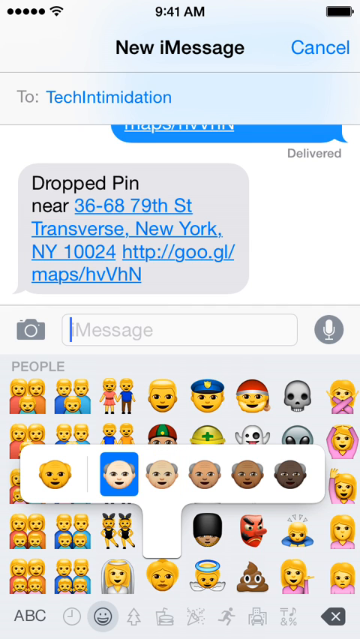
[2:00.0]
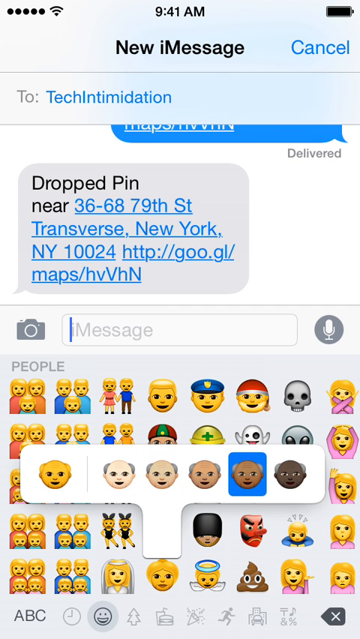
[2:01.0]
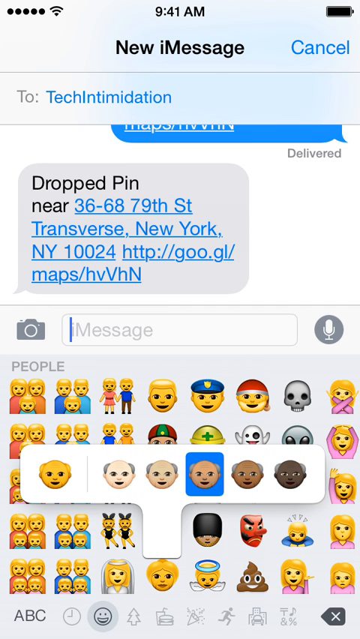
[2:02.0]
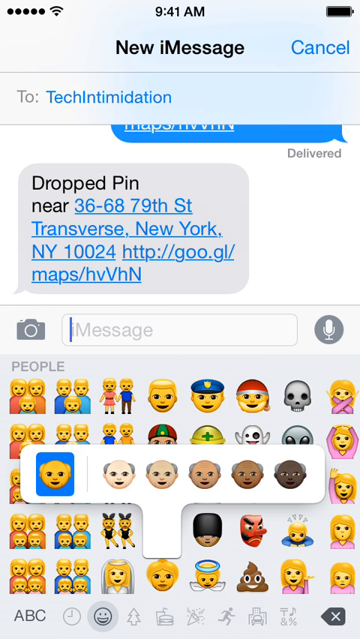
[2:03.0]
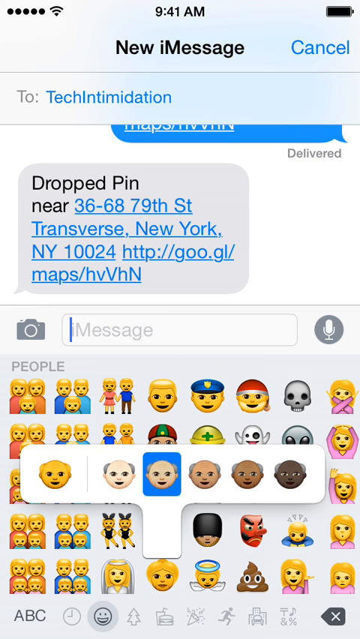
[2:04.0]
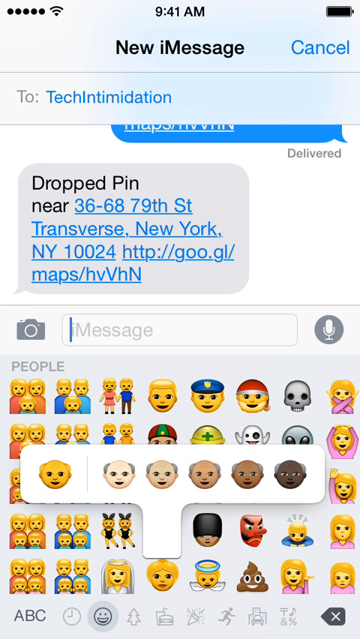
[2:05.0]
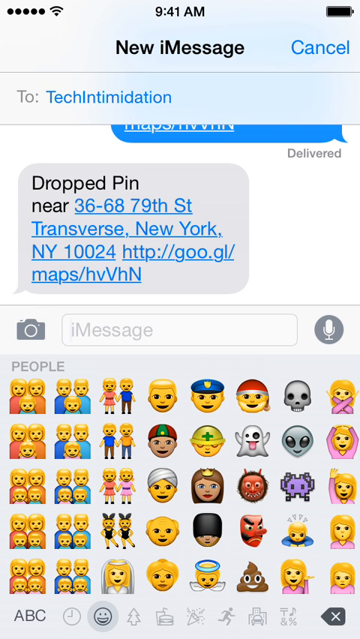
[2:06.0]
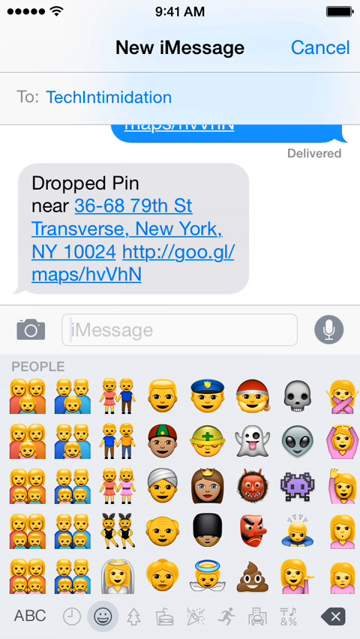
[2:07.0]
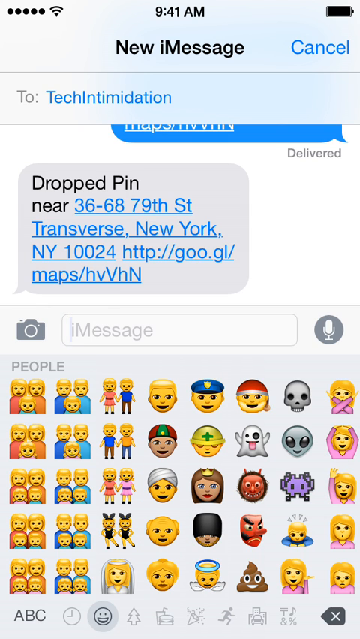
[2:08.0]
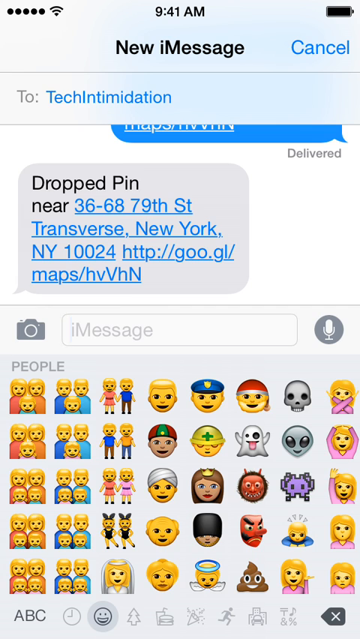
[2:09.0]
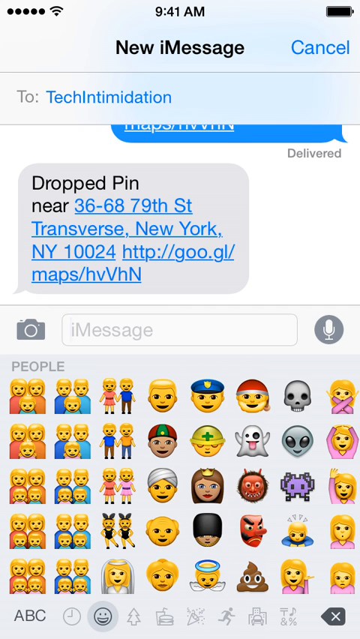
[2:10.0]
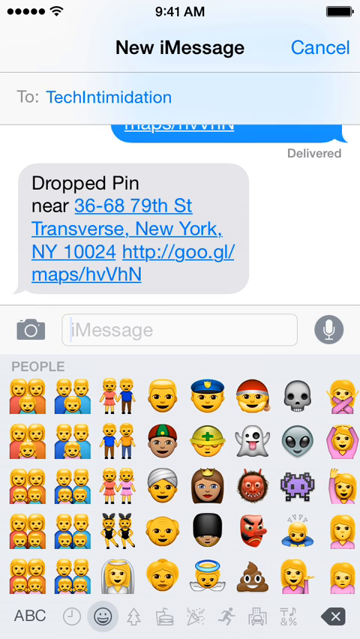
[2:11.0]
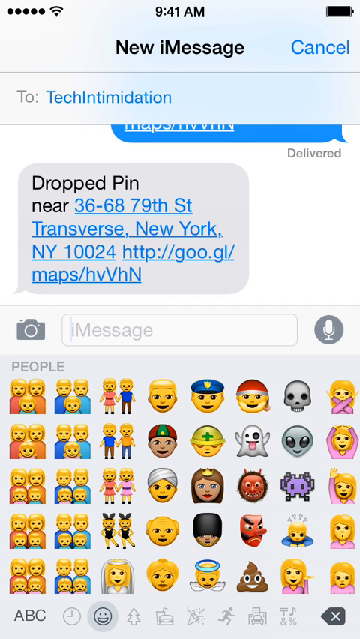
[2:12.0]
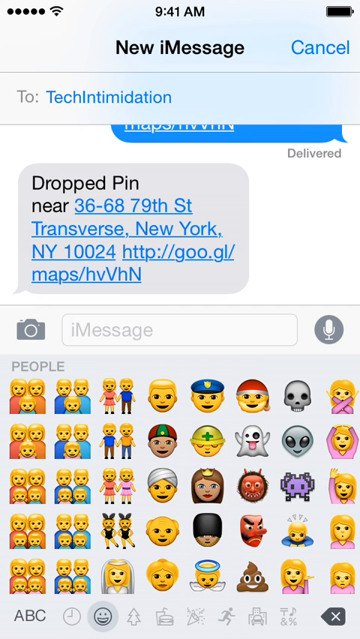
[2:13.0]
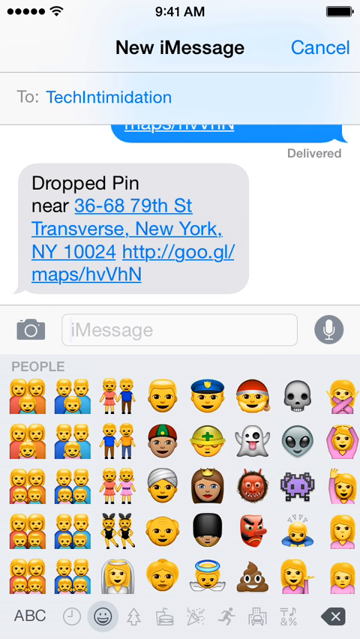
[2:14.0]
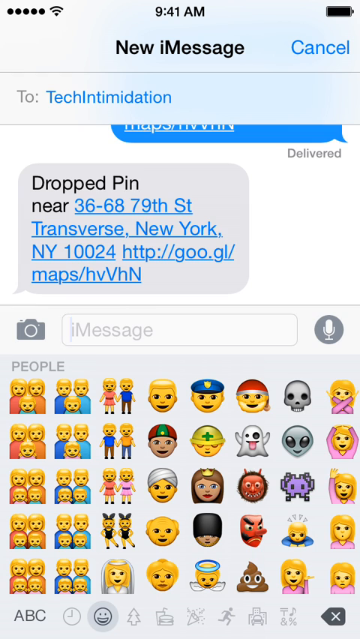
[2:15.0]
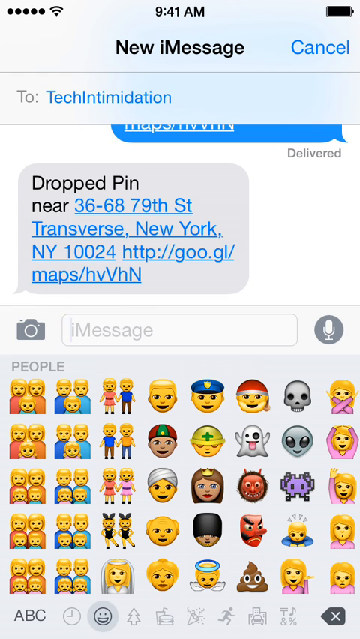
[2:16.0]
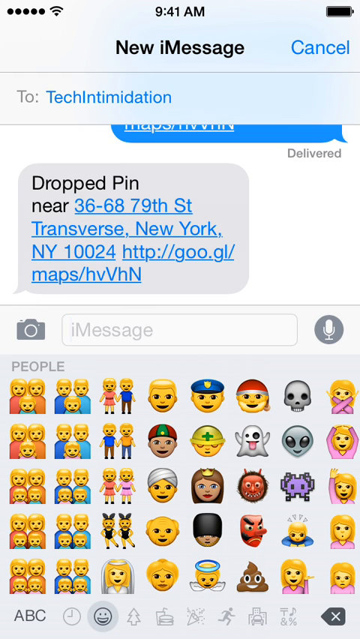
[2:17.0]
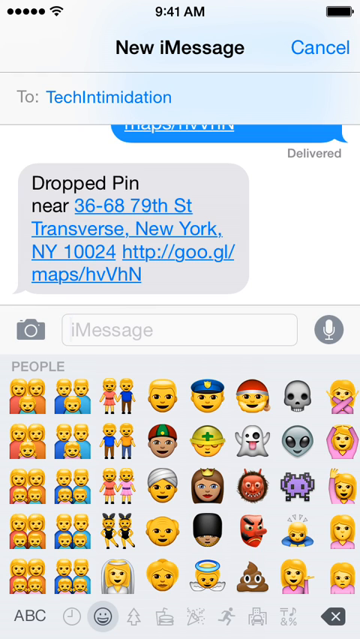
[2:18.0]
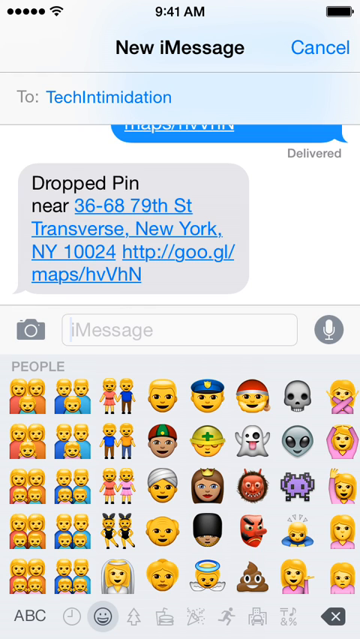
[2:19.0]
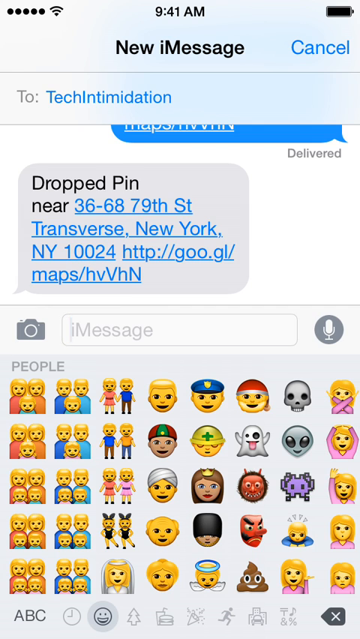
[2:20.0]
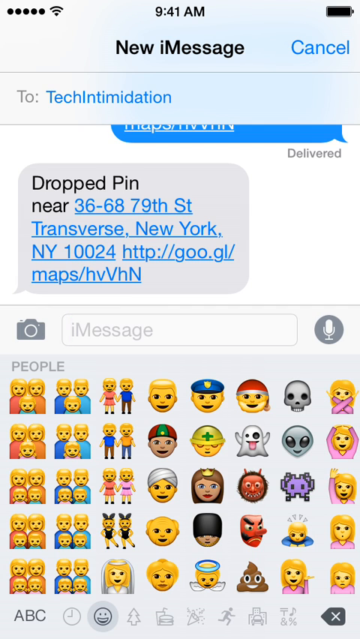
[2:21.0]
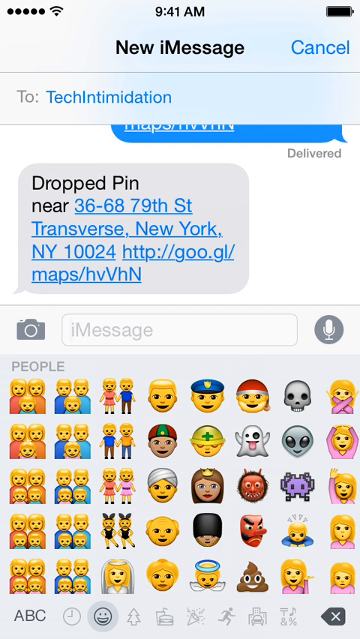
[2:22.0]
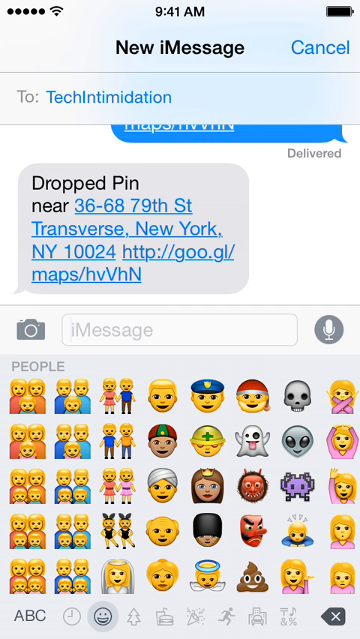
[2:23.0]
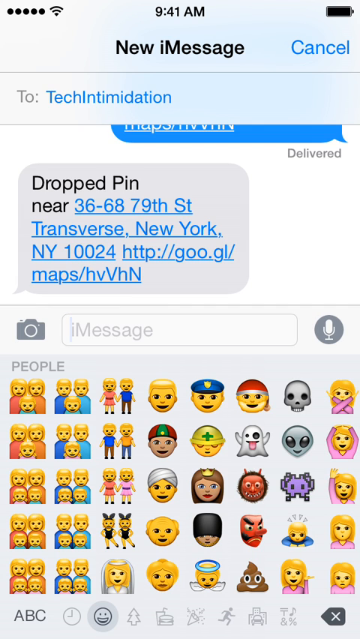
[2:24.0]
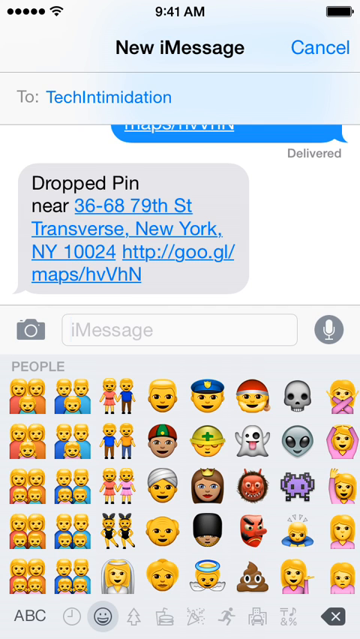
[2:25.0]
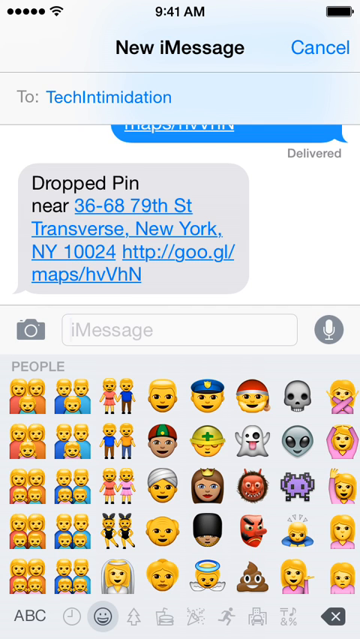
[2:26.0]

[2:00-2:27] In messages, the user scrolls through the skin-tone options of the old man emoji, moving down to the right to the dark black man, then back to the left to the default man, repeating this before cancelling out of it without selecting anything. The emoji may be an old man or possibly an old woman; it is hard to tell because the video is grainy and low quality. Above it seems to be another old person, possibly of the other gender, though the quality may be too low to tell. Further above that appears to be a person wearing a white turban, above that a person wearing a mining helmet with a green light coming from its center, and above that a person who looks like a middle-aged man with plenty of hair, or possibly a younger man.